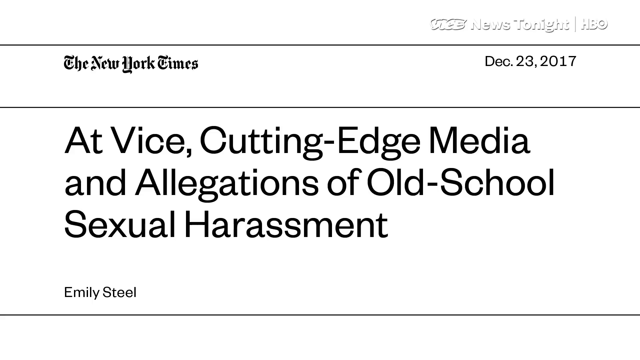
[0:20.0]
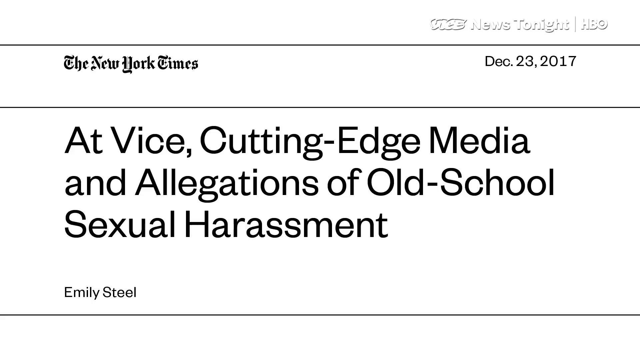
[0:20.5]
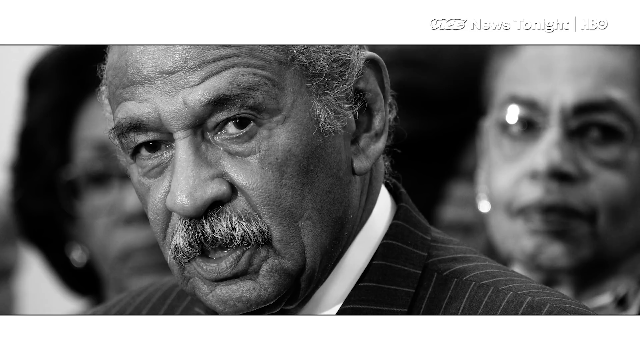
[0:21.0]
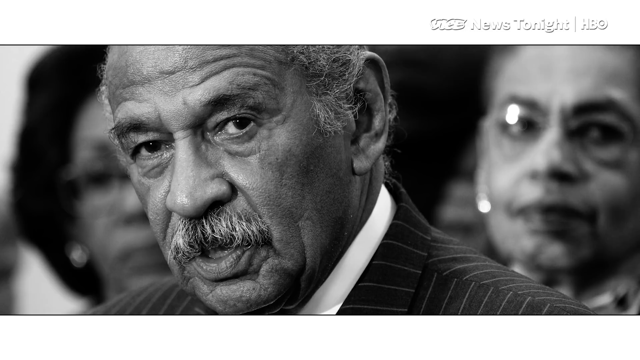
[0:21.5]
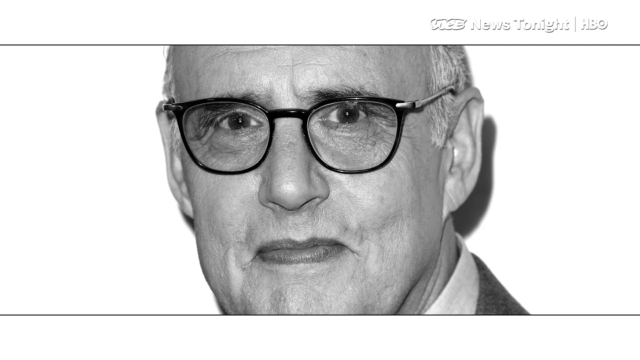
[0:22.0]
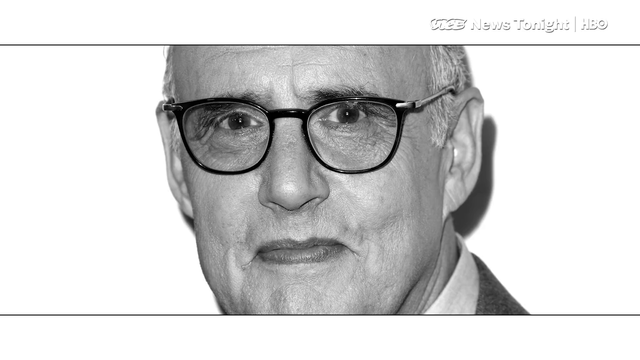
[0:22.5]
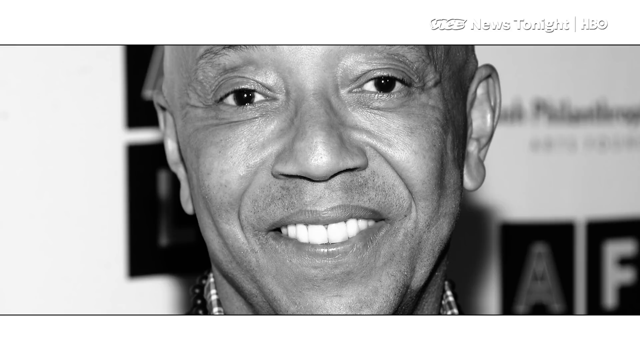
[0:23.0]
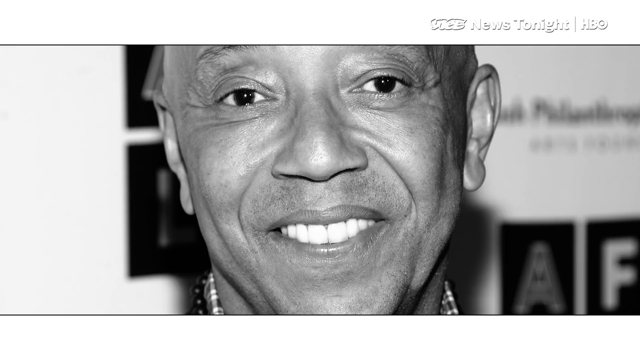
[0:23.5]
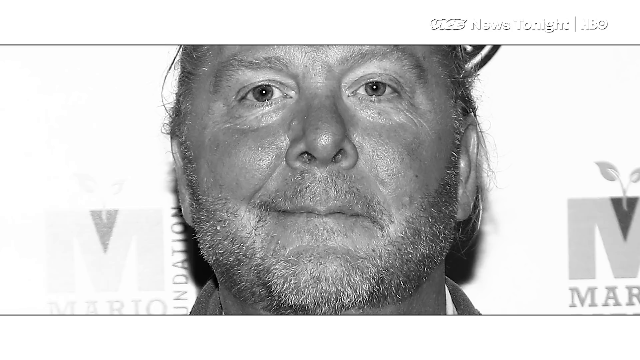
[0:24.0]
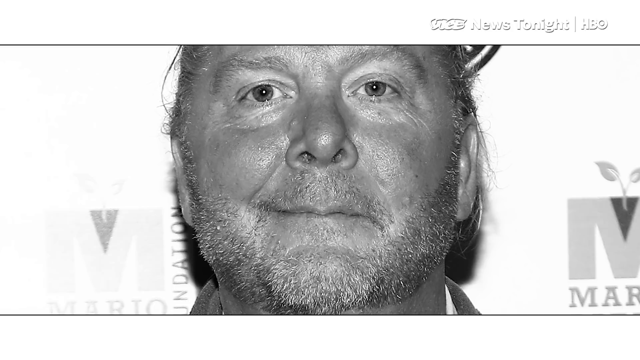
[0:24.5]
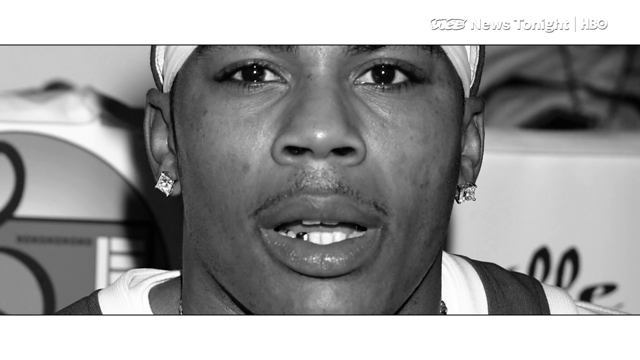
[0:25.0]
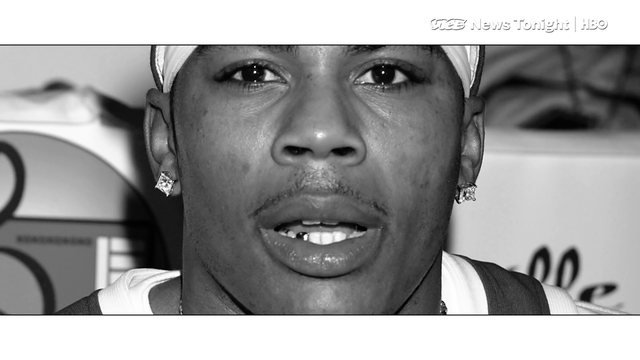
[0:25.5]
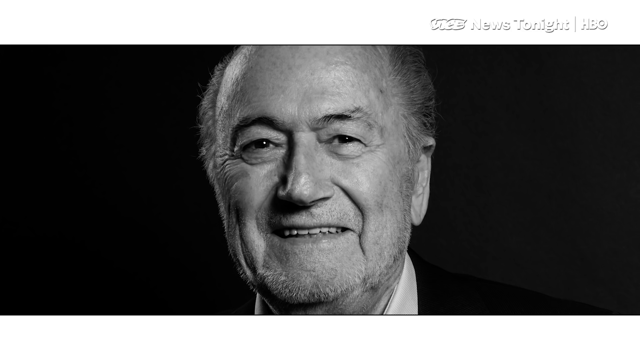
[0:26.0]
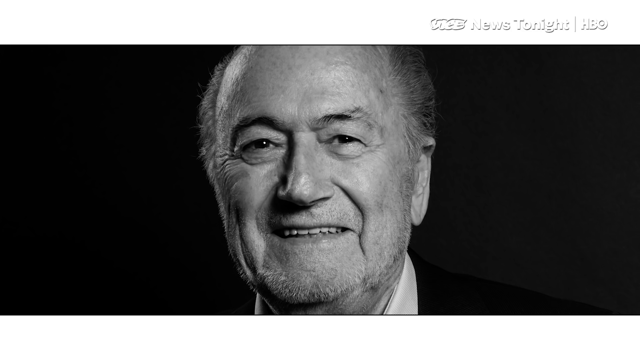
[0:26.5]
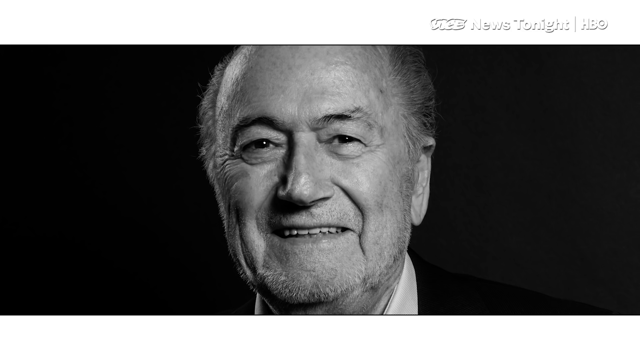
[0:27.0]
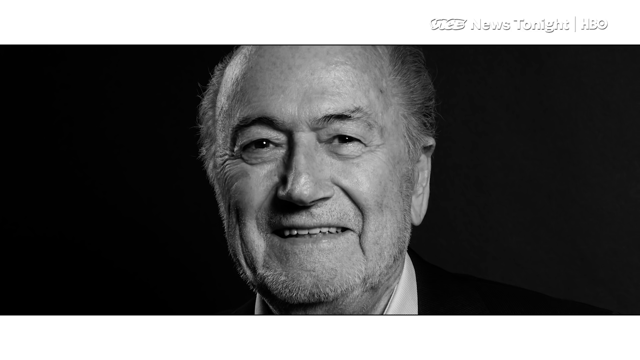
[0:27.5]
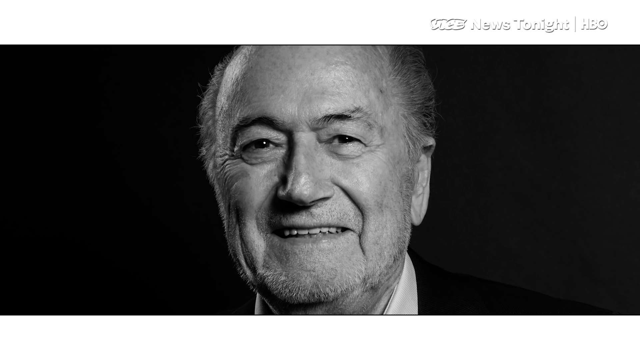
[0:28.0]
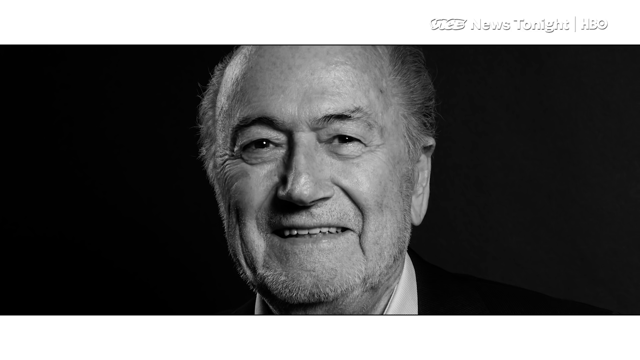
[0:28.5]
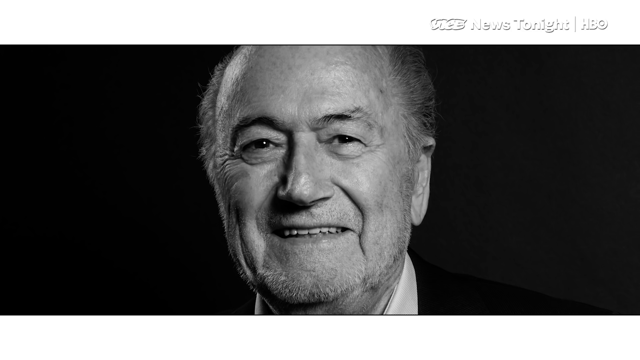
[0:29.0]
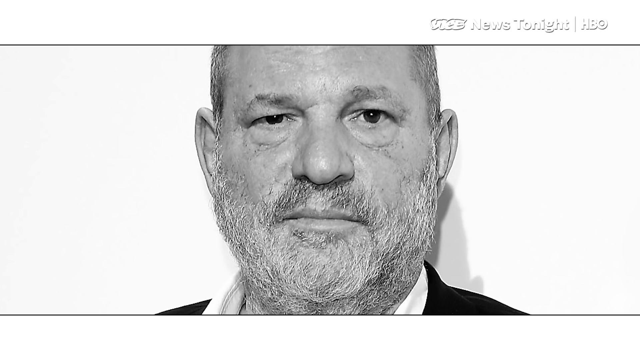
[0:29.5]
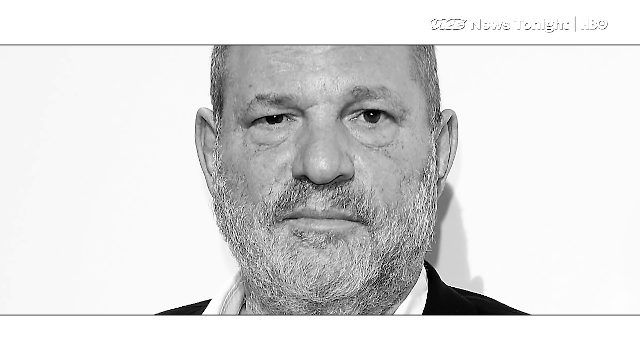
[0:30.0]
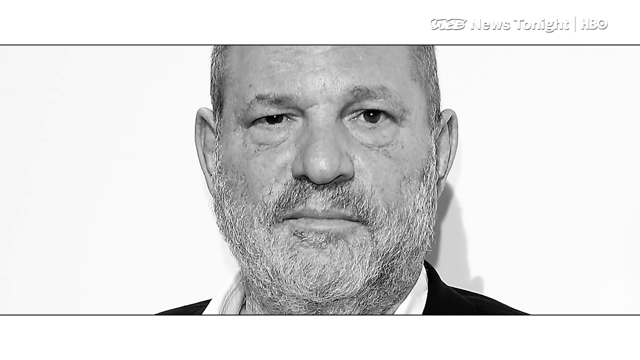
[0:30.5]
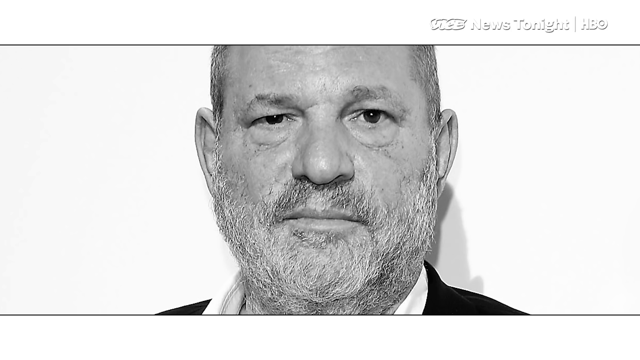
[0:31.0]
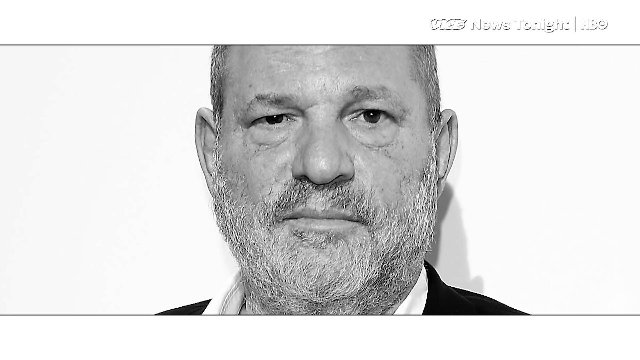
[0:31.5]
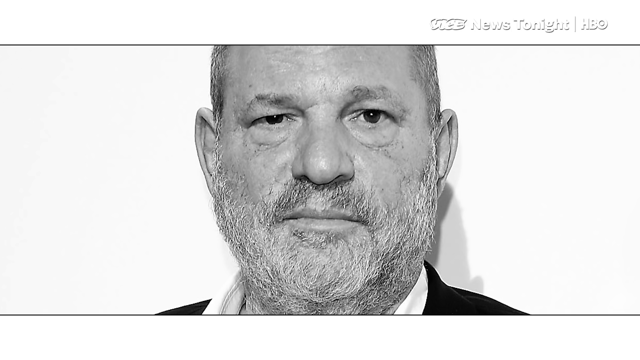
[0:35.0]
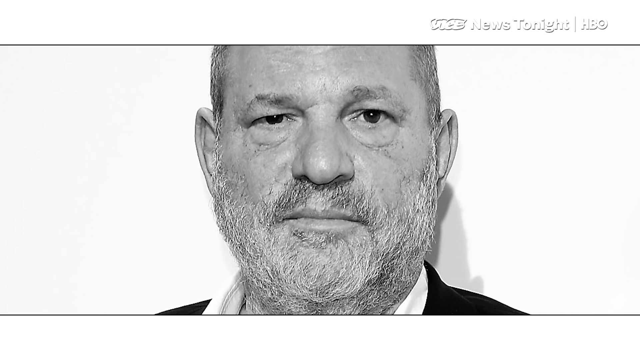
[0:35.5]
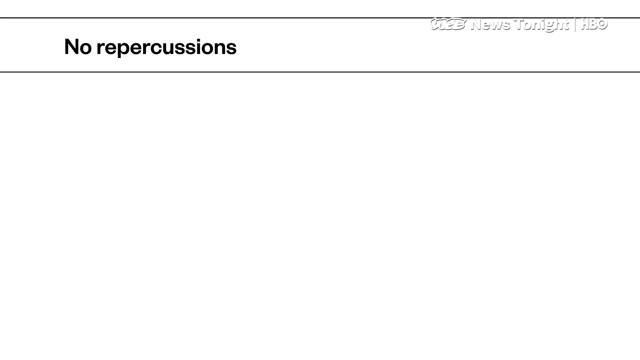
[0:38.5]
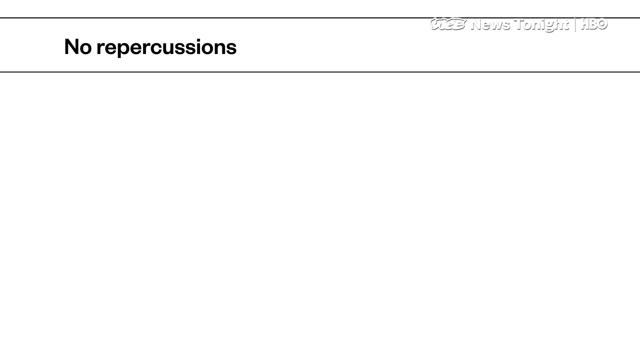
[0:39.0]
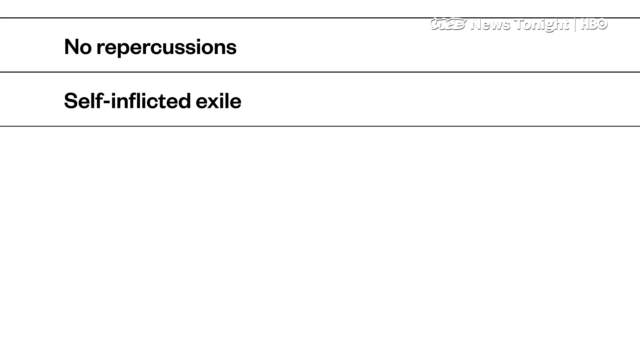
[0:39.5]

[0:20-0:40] The New York Times headline from the 23rd of December 2017 is followed by a series of photographs of men. One man with a moustache looks at the camera while two women behind him look very serious. Another man with glasses looks seriously straight at the camera from the middle of the photograph. Next come a smiling man, a man with stubble, and two more men, all looking straight at the camera; all of them are middle-aged. Finally there is a still picture of Harvey Weinstein looking straight at the camera, which stays on screen for a long time. Then a caption reads "no repercussions, self-inflicted exile".